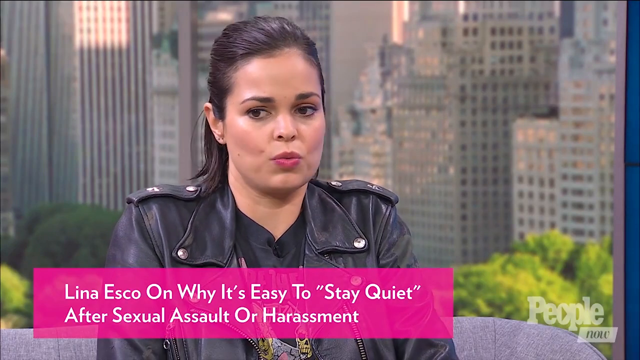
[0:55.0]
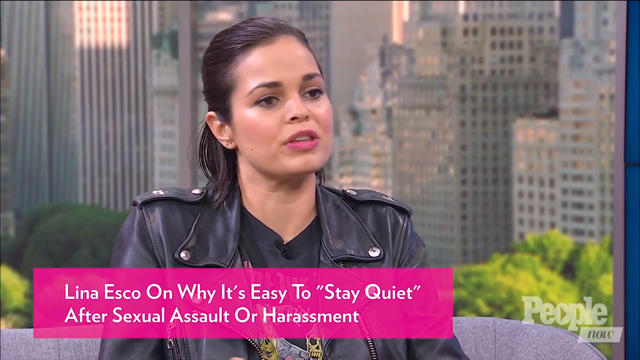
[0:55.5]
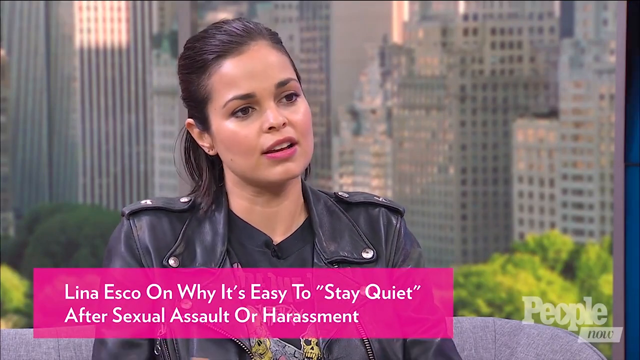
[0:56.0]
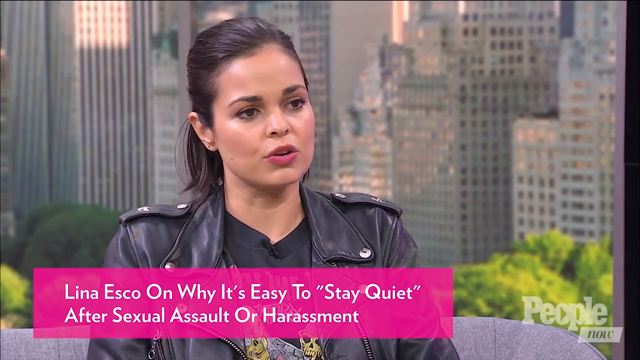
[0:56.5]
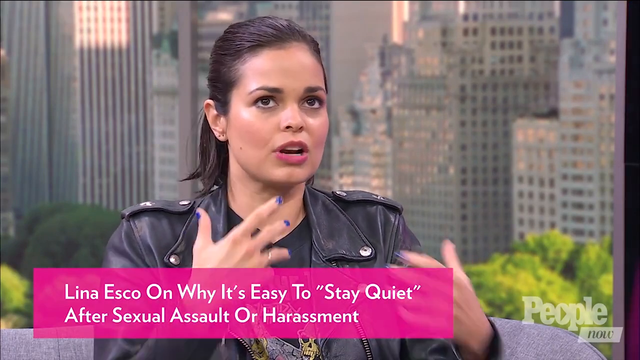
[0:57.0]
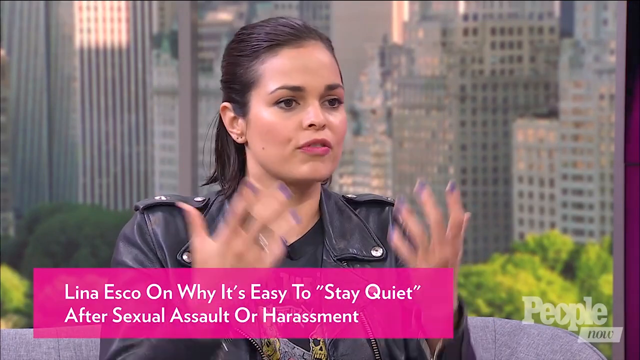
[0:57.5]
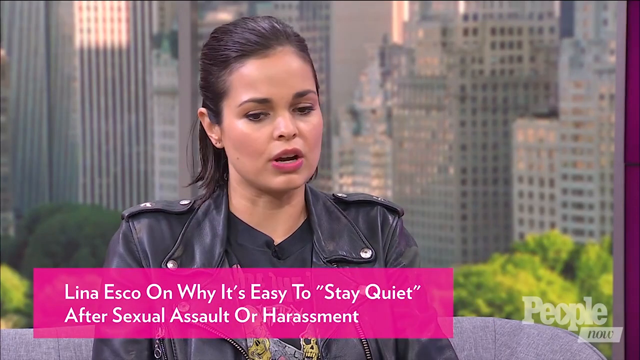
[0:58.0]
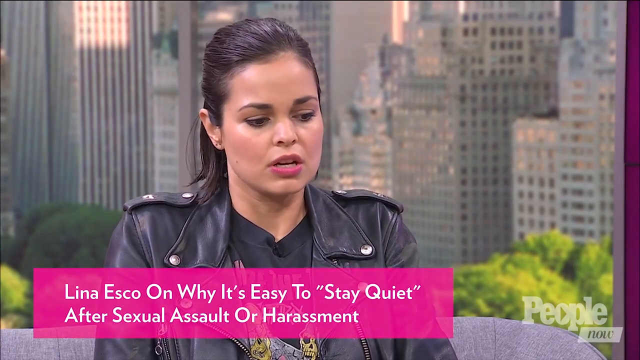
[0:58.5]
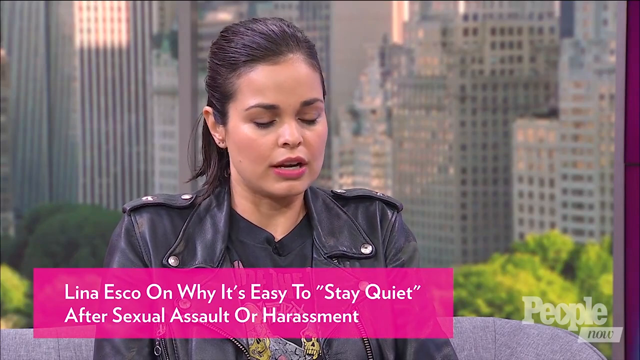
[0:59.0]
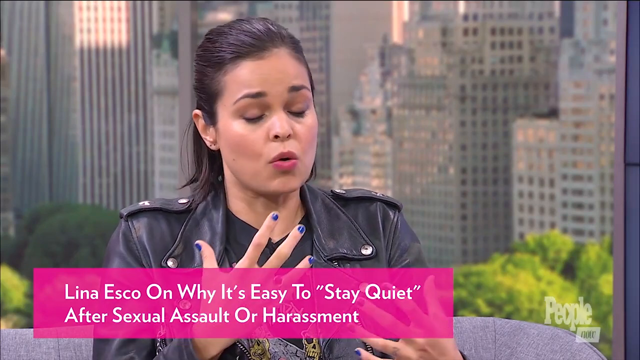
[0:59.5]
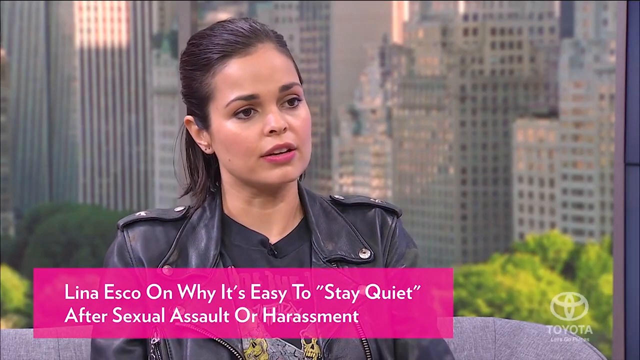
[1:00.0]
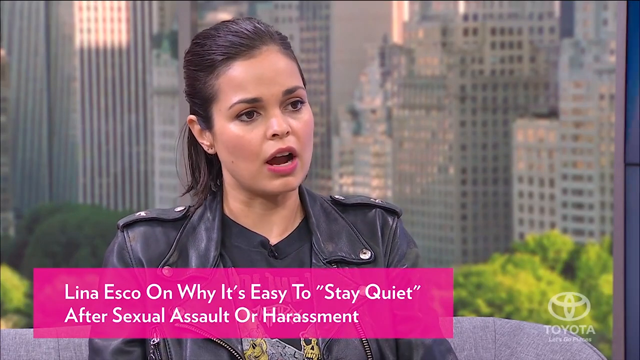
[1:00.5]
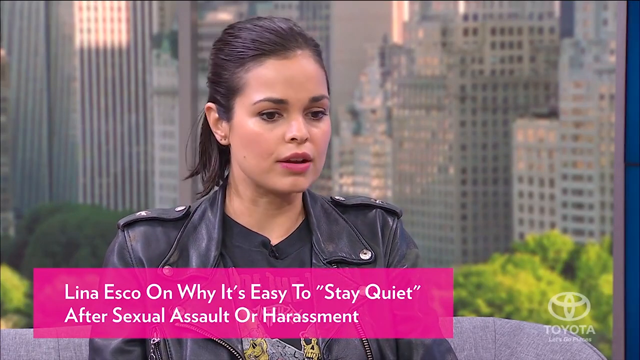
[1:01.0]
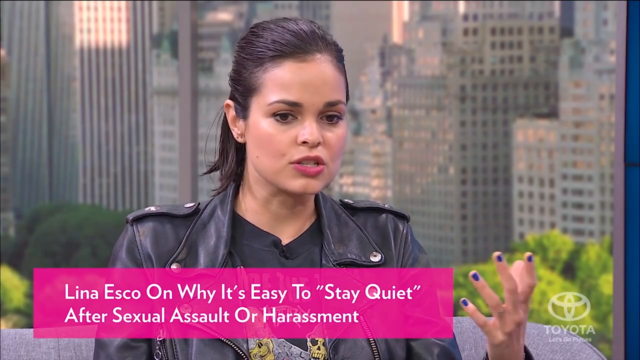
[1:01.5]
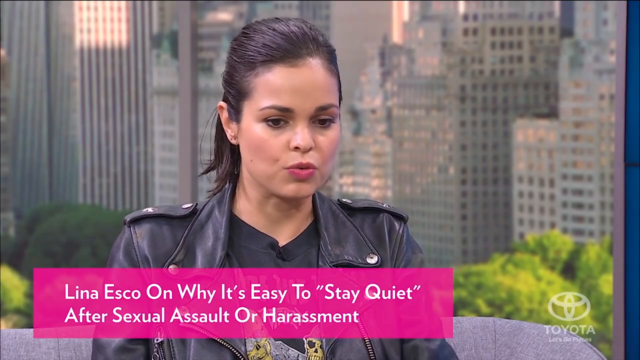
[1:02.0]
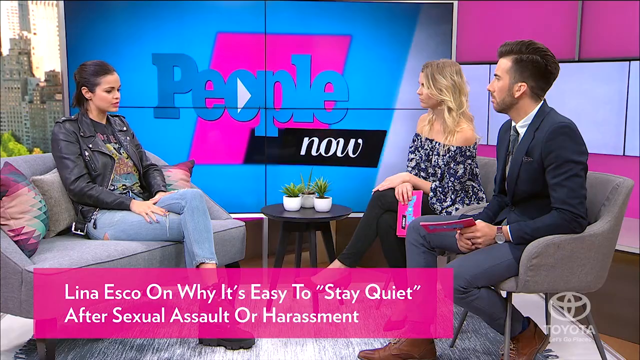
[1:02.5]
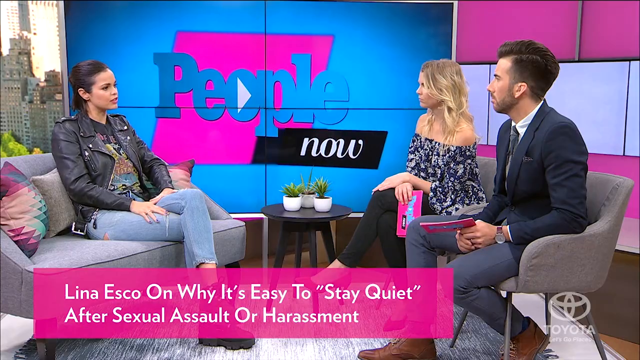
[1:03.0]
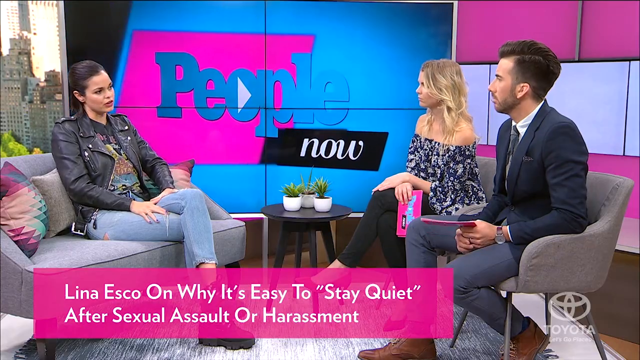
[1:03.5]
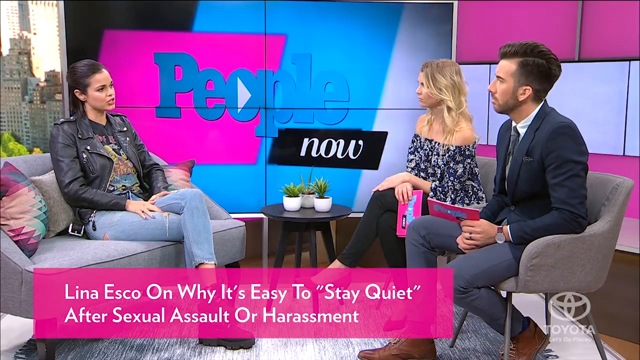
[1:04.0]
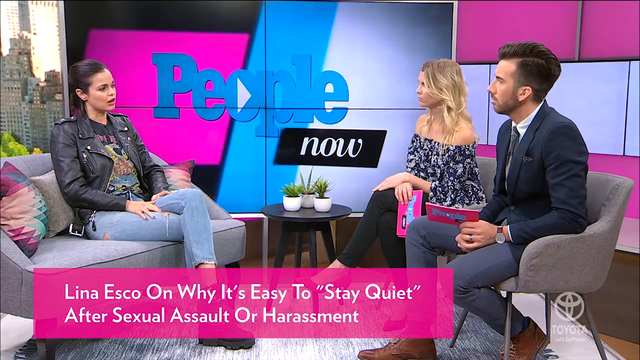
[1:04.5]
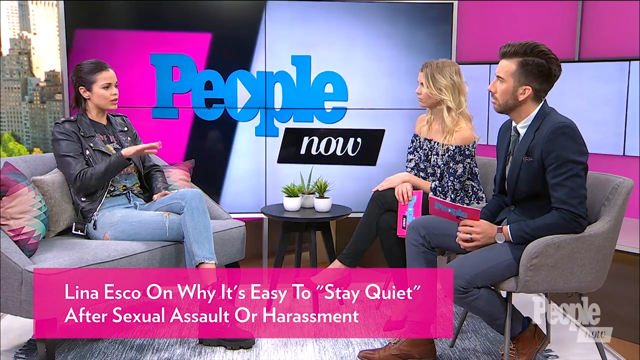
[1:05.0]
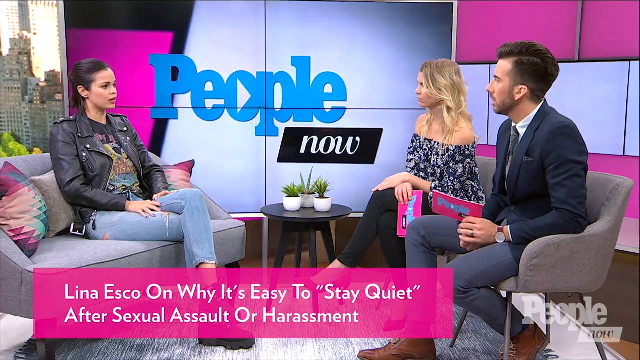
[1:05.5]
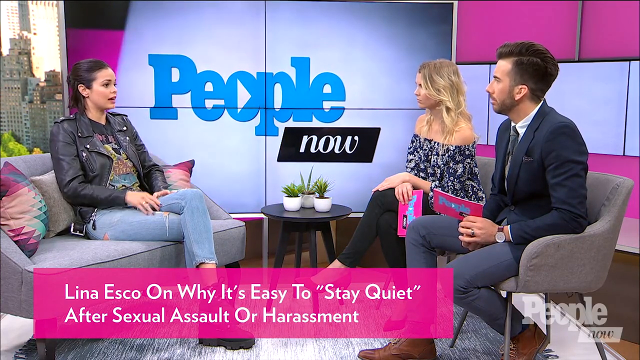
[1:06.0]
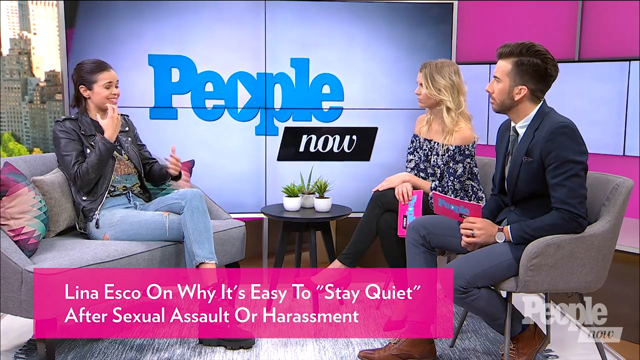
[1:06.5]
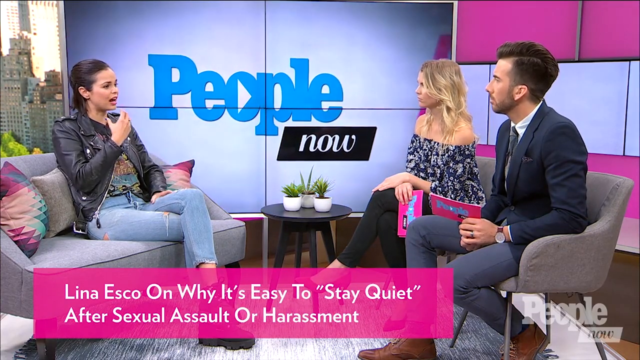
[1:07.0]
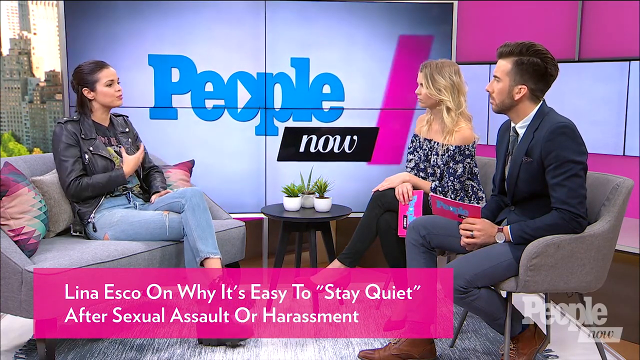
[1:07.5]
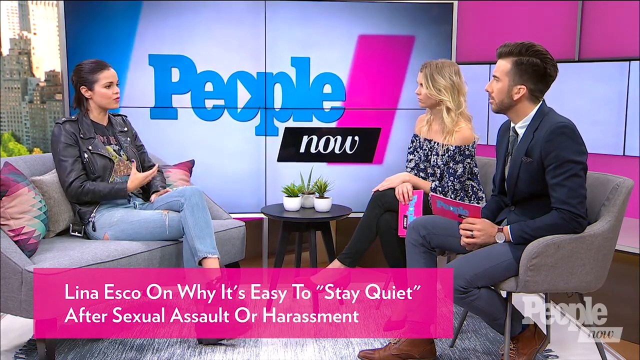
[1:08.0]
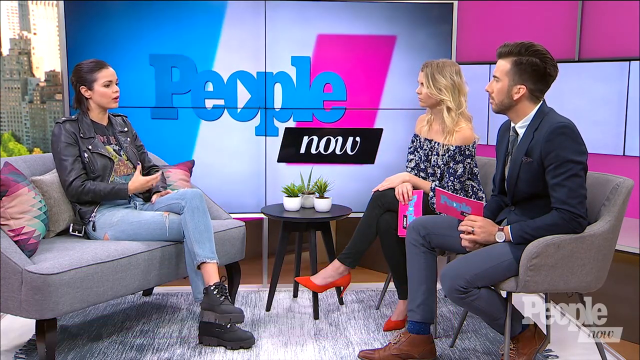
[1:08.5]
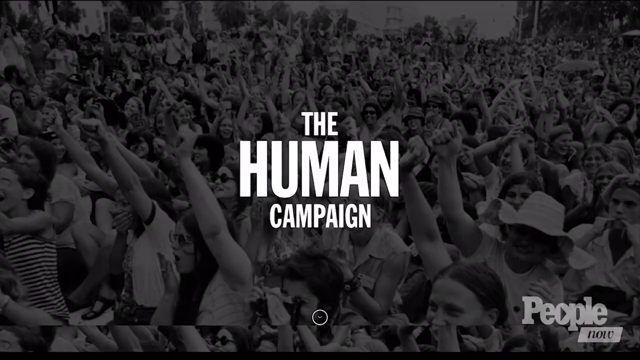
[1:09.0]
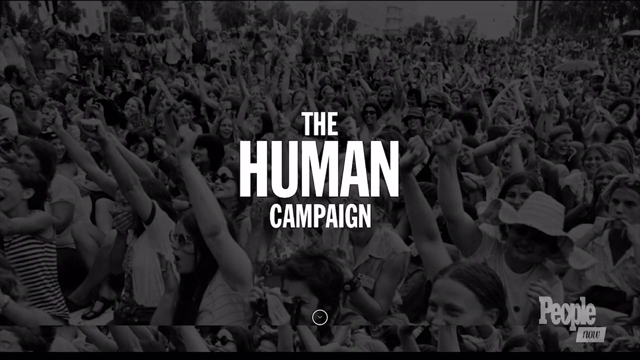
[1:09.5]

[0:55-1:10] The actress keeps talking, and on-screen text reads "Lila Esco on why it's easy to stay quiet after sexual assault or harassment". After a while, for the first time, the camera zooms out and shows two other people in the studio, a man and a woman who look like TV presenters, making three people in total with the woman being interviewed. The woman presenter has blonde hair, the man has black hair, and both wear corporate outfits.